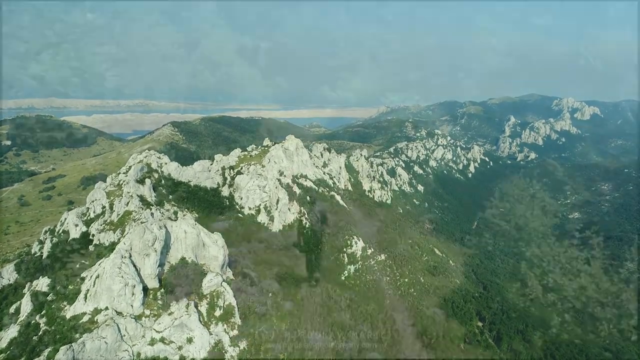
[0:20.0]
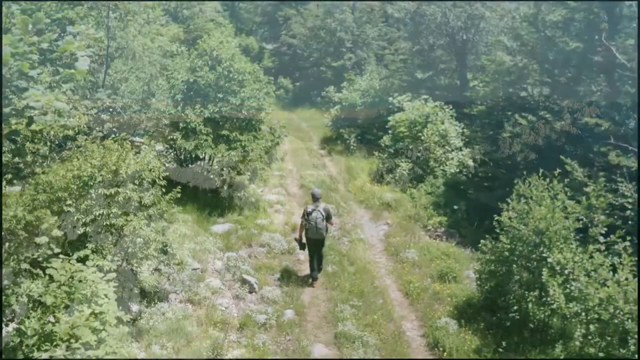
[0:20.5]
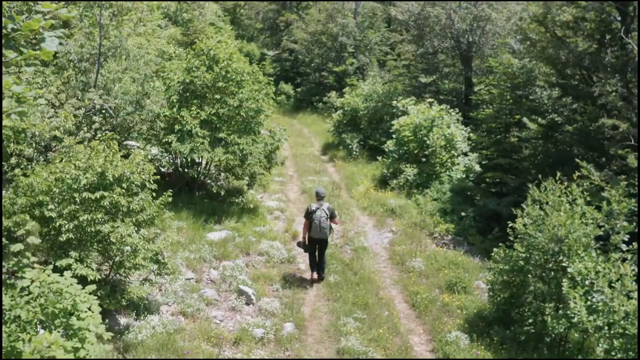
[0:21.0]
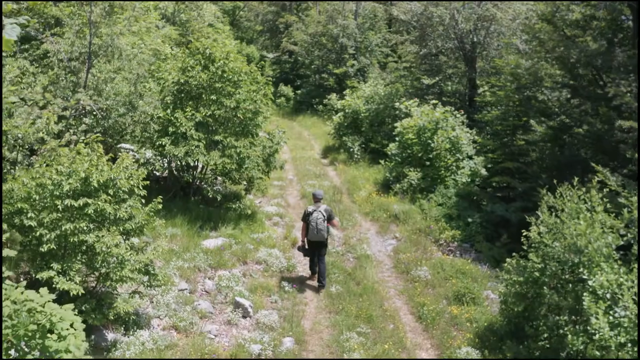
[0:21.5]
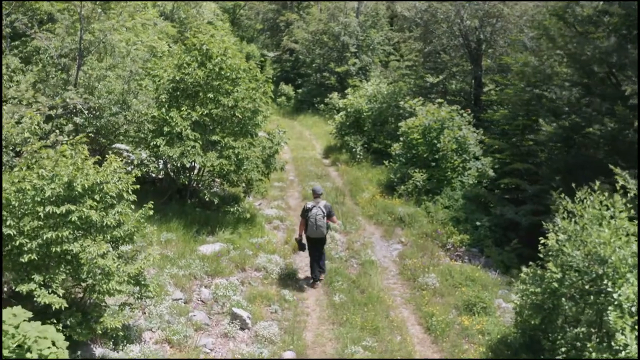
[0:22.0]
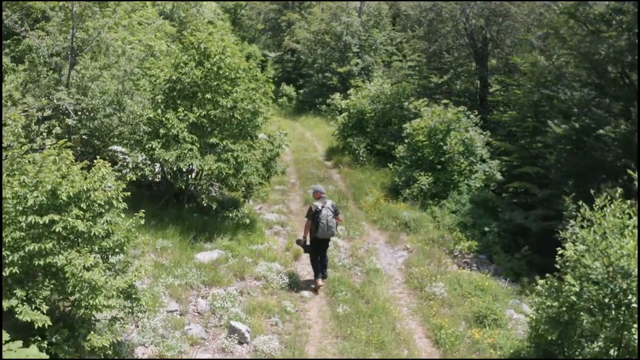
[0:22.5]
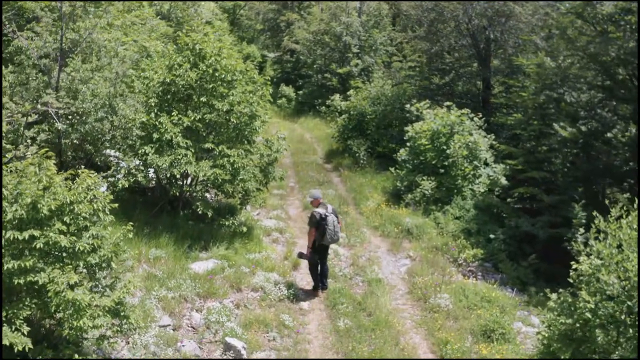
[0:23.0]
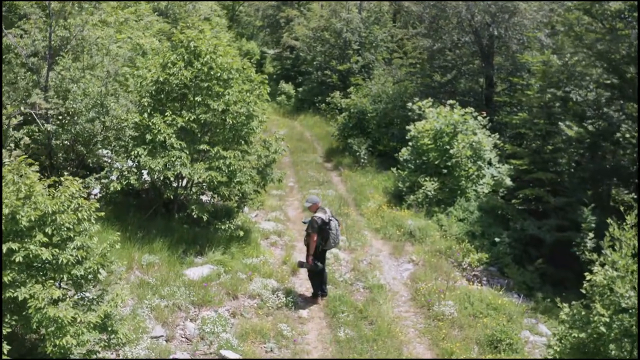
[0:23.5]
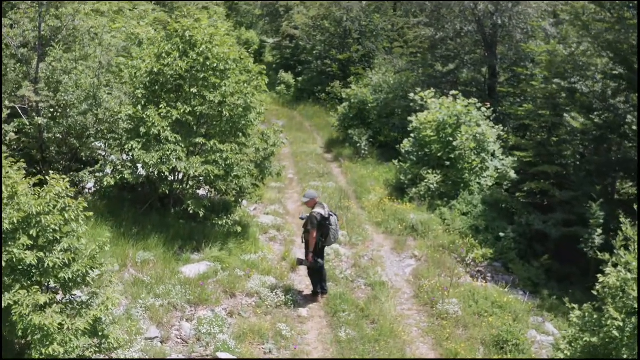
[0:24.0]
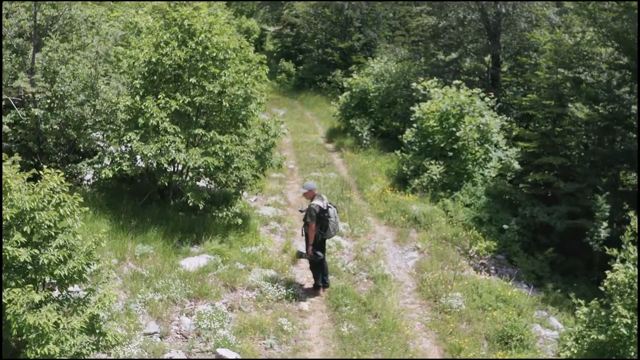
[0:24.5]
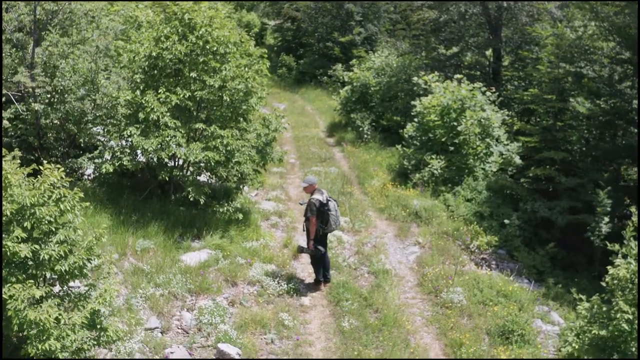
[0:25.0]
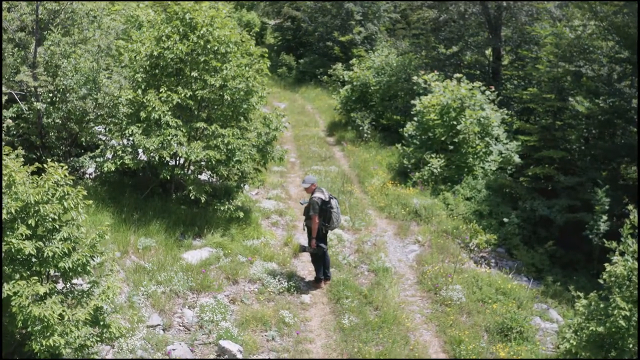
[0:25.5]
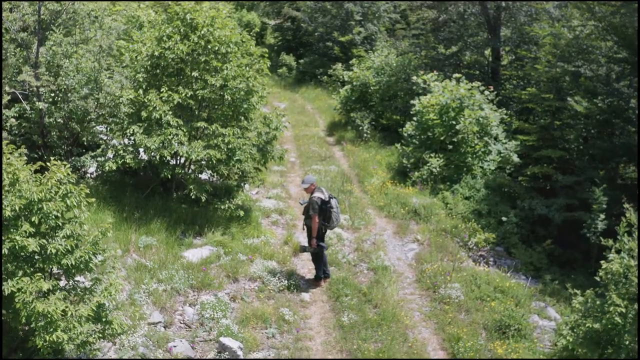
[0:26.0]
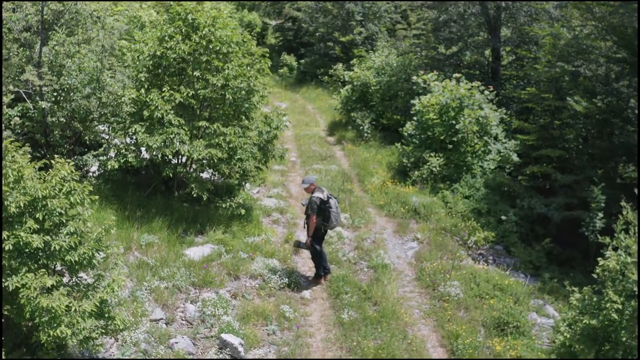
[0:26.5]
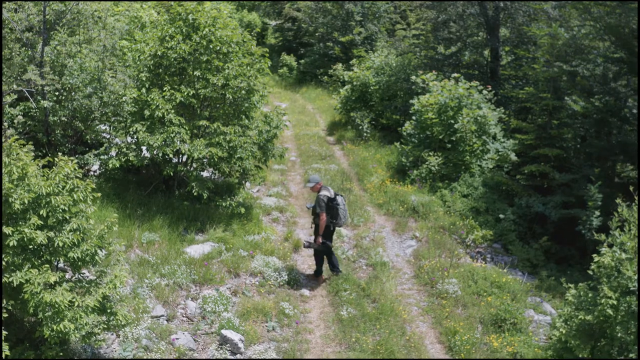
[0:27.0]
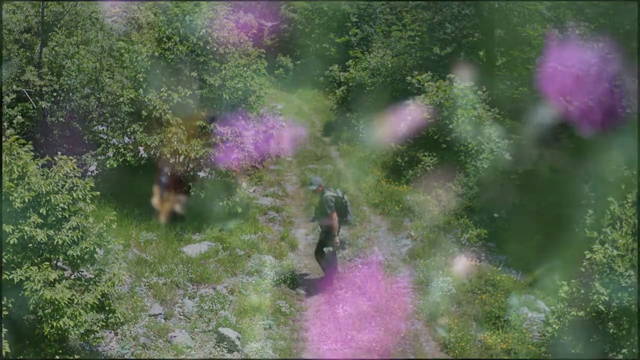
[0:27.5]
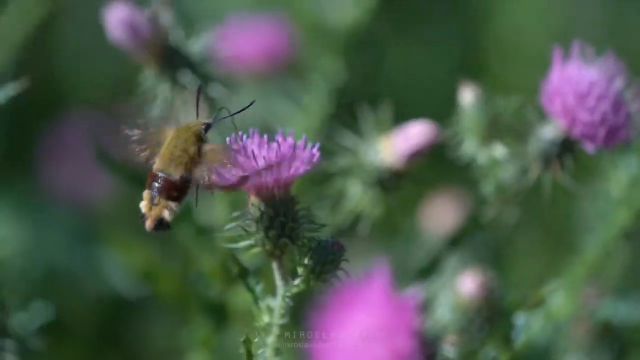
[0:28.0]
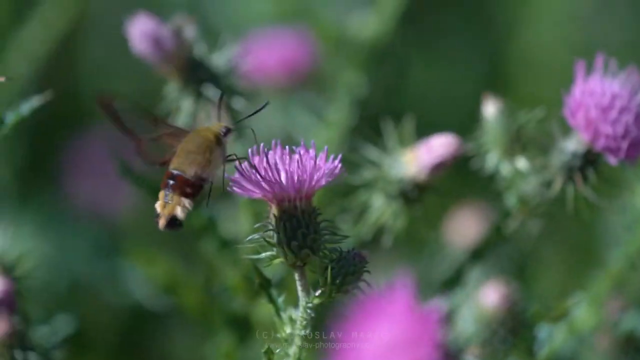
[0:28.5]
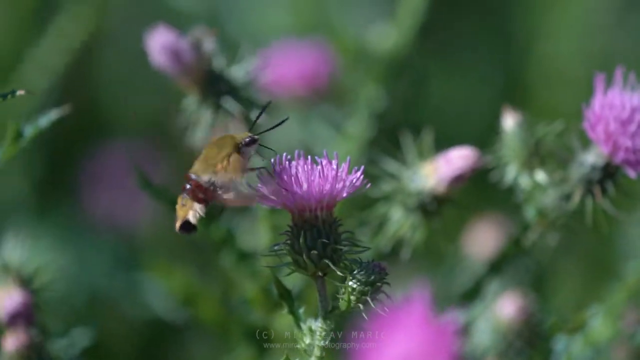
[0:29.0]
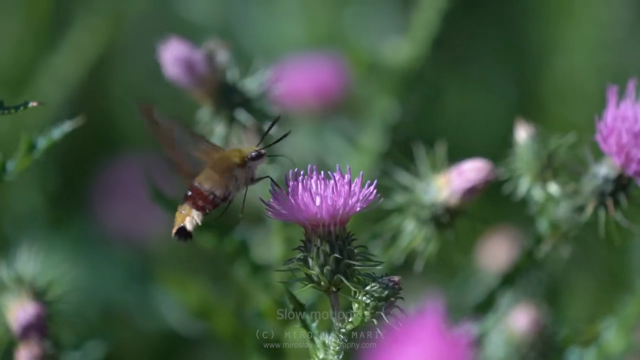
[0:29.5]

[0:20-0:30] A mountain range has peaks covered in rocks. The video cuts to a person hiking in nature on a trail with a lot of vegetation; the trail has a lot of grass on it, with patches where there is no grass and what looks like tire marks. It cuts to a close-up of flowers with violet petals, where some sort of insect seems to be collecting either nectar or pollen. It then cuts back to a man hiking, wearing what looks like a green backpack, a shirt and what looks like a green hat. He is kind of staring to the left, kind of looking at the plants in front of him, and he is holding what seems to be a camera.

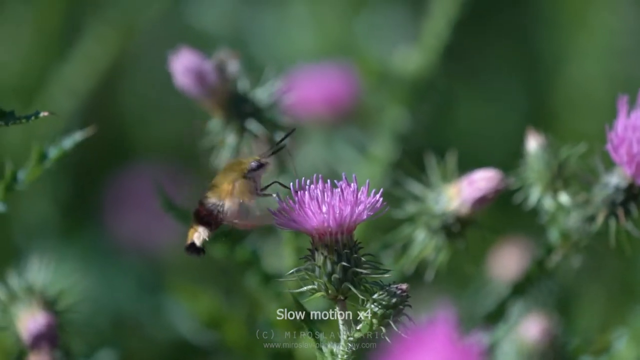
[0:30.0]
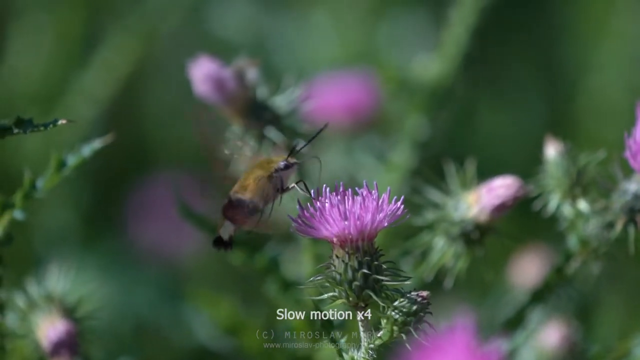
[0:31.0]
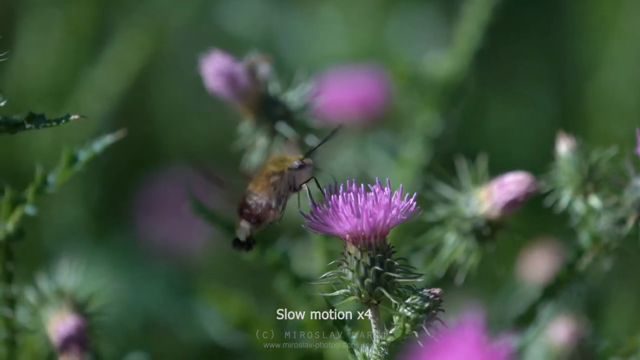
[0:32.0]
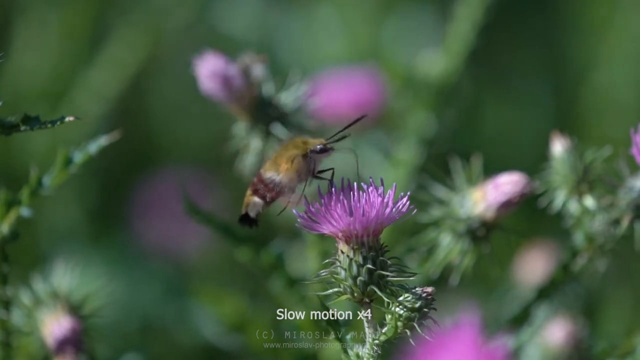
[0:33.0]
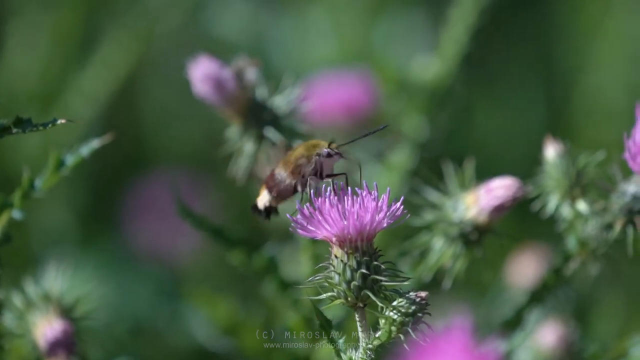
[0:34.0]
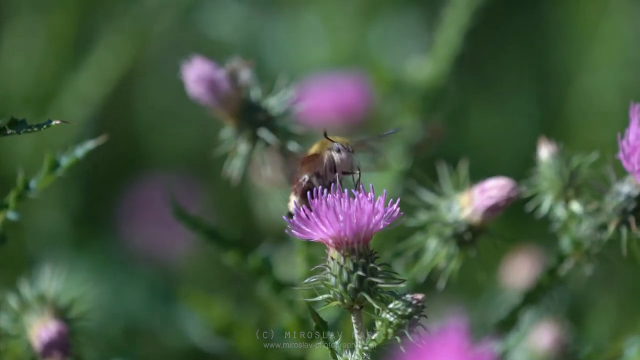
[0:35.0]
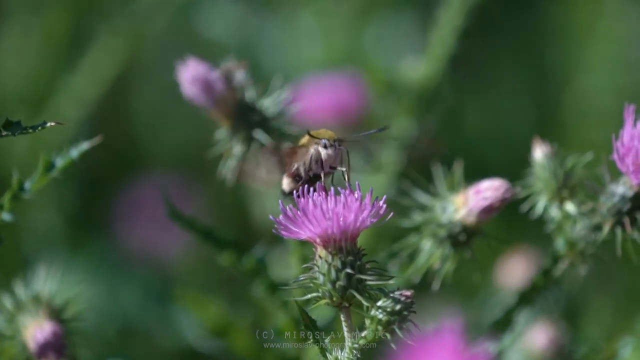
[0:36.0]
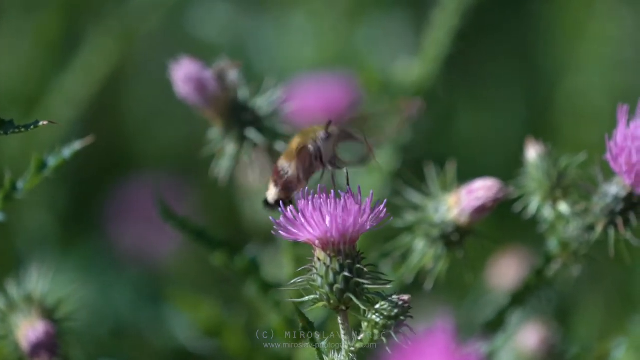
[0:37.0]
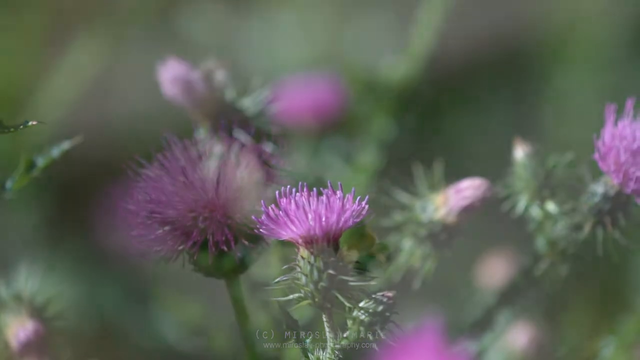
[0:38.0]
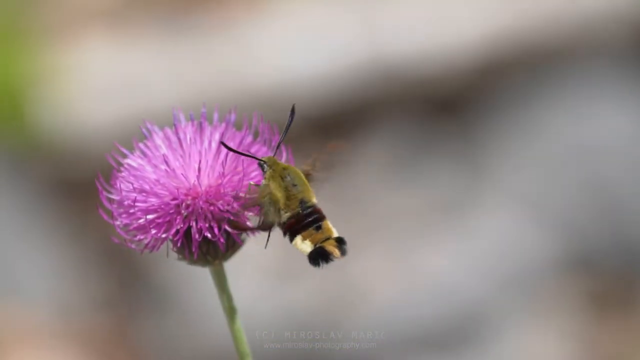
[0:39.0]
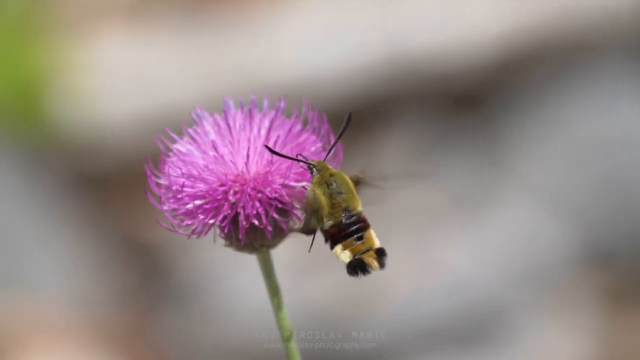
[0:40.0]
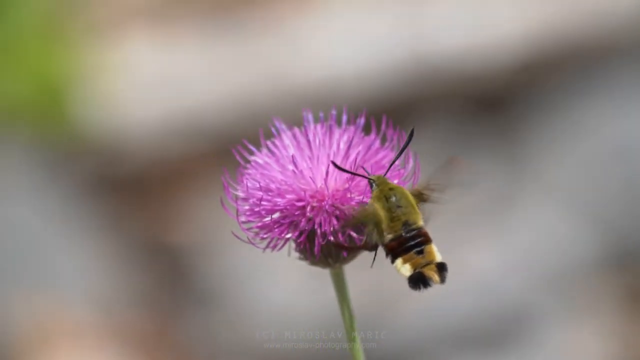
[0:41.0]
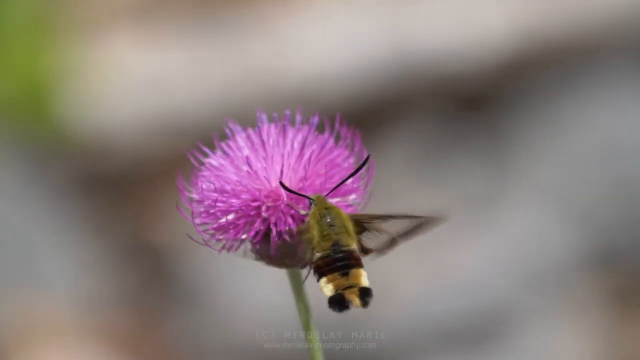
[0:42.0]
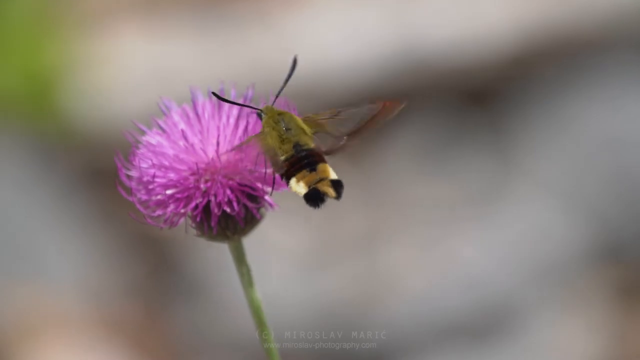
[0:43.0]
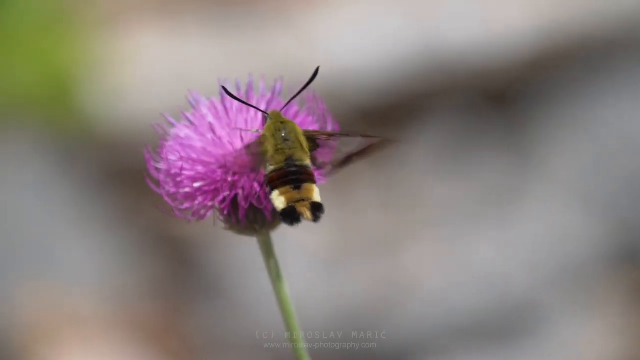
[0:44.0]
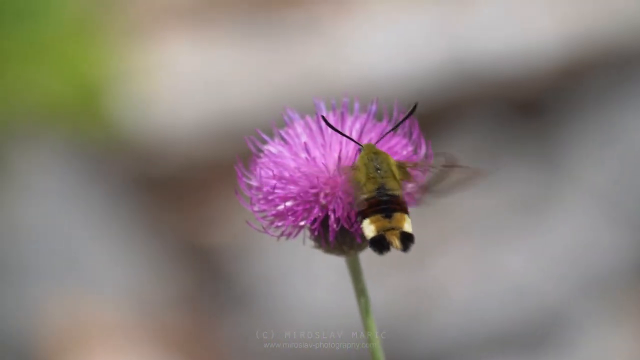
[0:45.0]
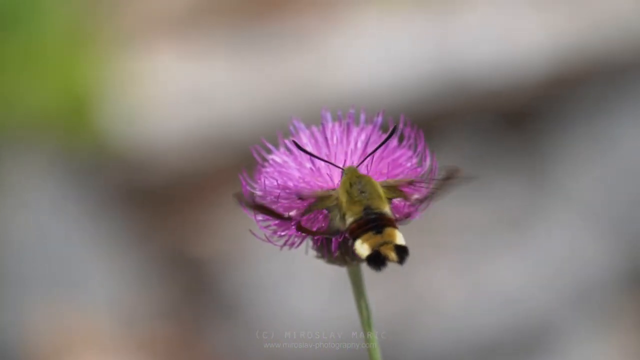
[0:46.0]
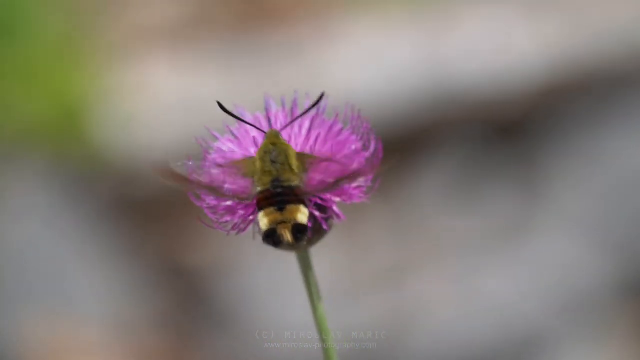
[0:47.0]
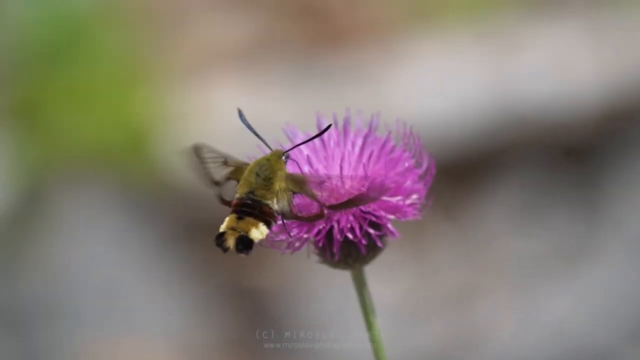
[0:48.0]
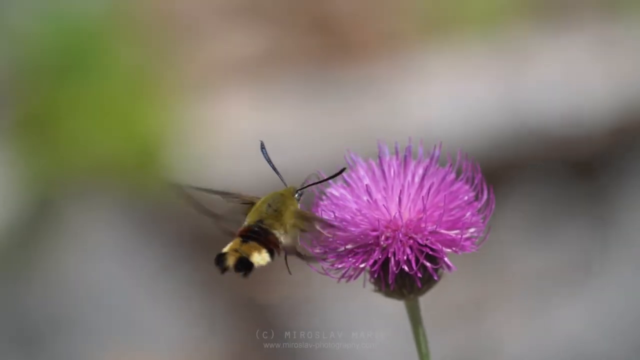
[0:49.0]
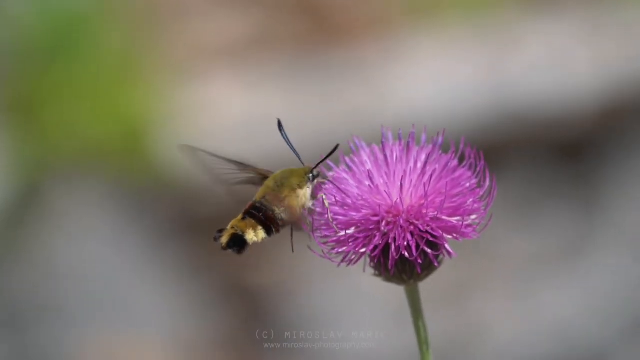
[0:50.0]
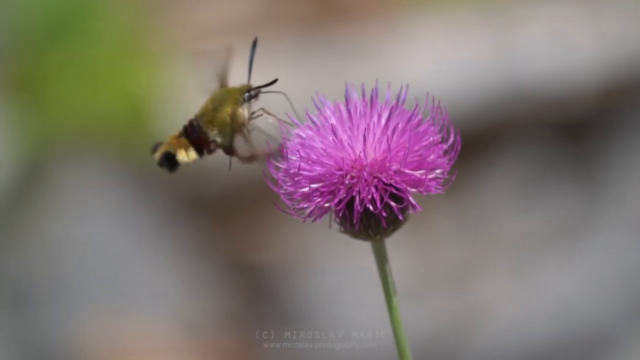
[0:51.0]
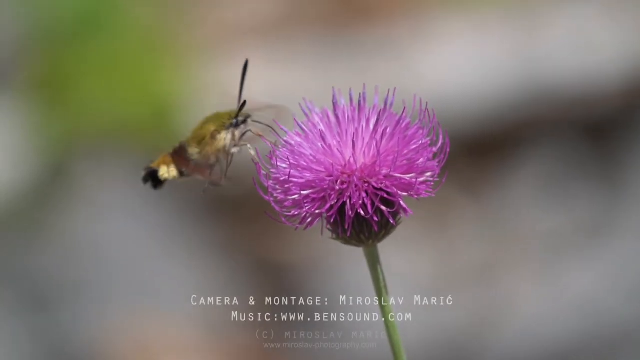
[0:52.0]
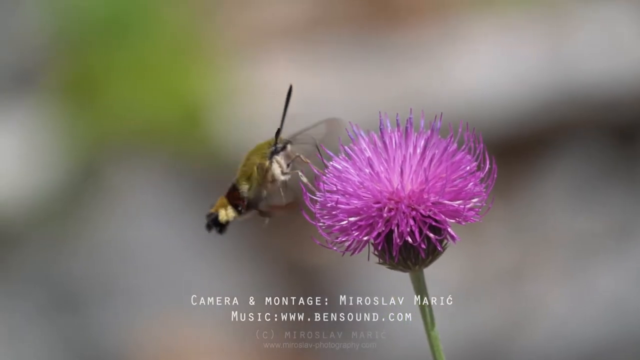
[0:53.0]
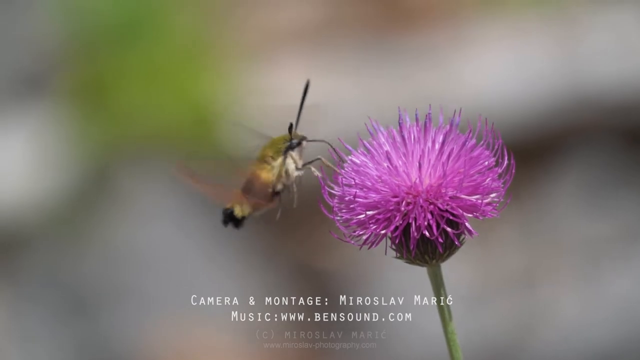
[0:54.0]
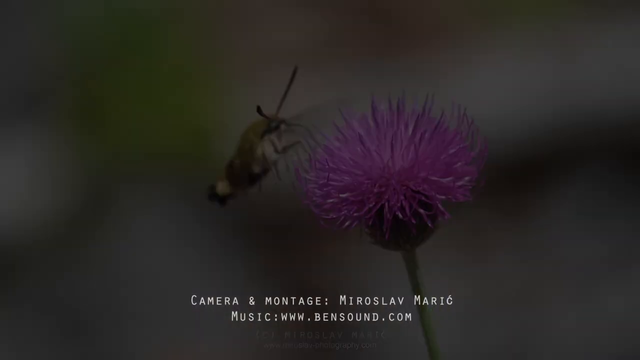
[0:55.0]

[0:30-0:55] A close-up shows a violet flower with an insect on top of it that looks like it is collecting nectar. The insect's body is kind of greenish, toward the tail it looks kind of black and gray, and its antennae also look black. The insect then flies away. Another angle shows the same type of insect flying, keeping itself kind of in the same position as it flaps its wings, and collecting nectar from the same type of flower: a violet flower with really thin petals and a long stem that is kind of light green. The insect continues to move around the flower and seems to be probing it with a long black part coming out of its face. The video then cuts back to the original angle of the insect.